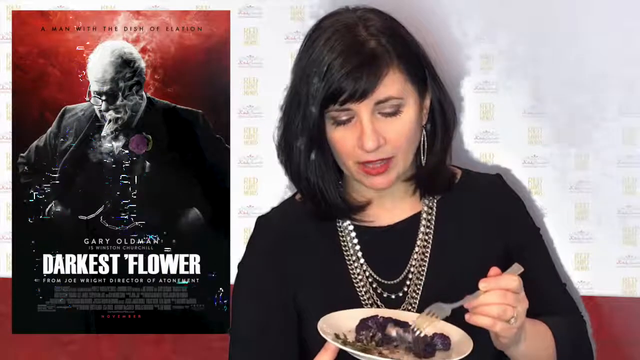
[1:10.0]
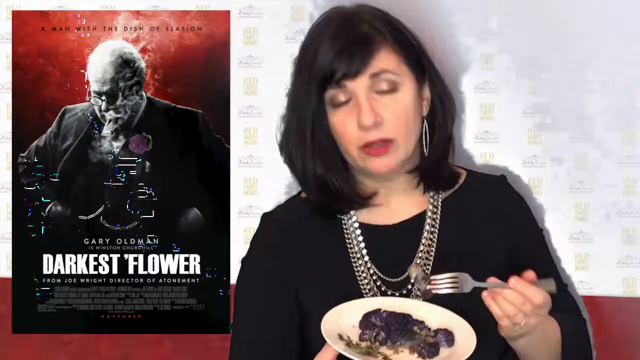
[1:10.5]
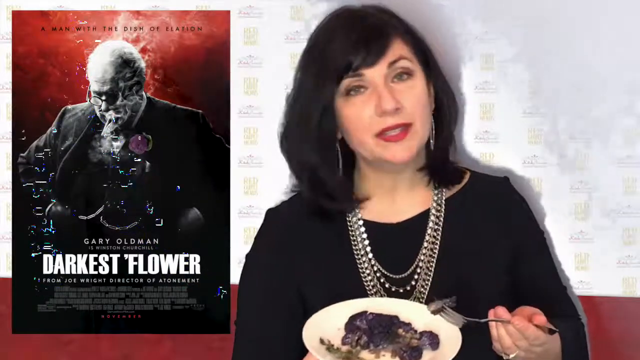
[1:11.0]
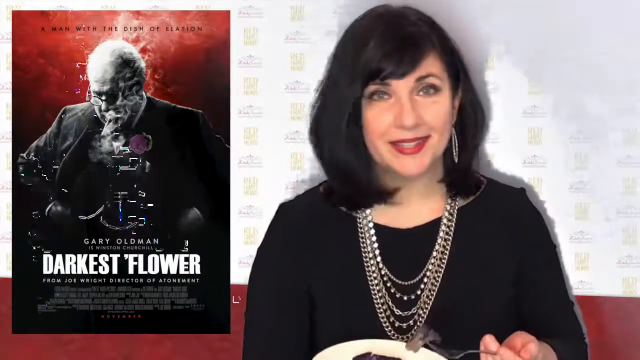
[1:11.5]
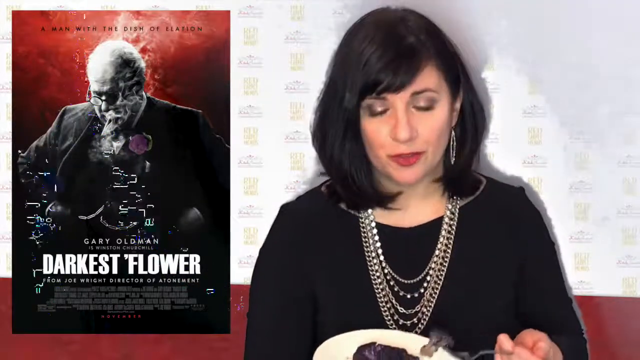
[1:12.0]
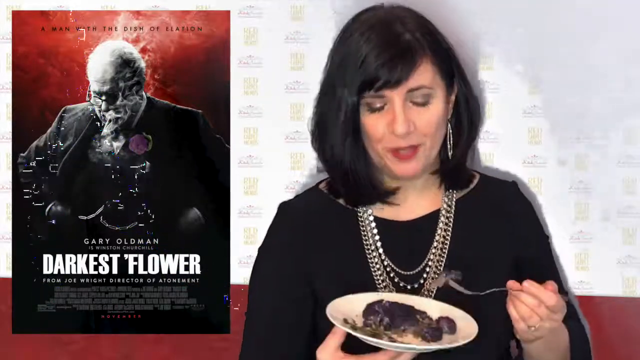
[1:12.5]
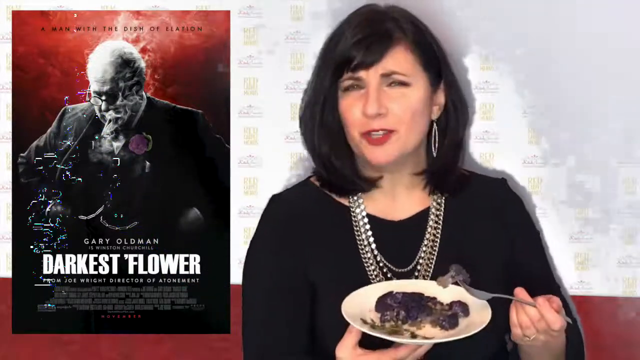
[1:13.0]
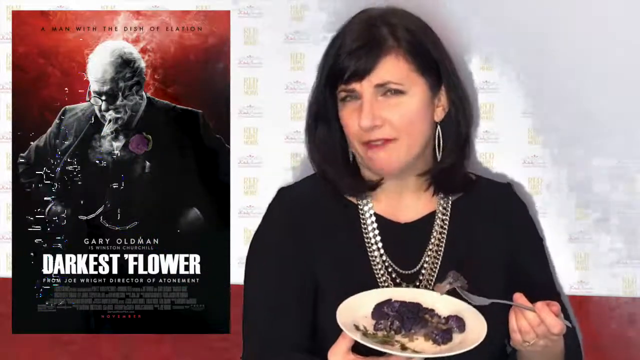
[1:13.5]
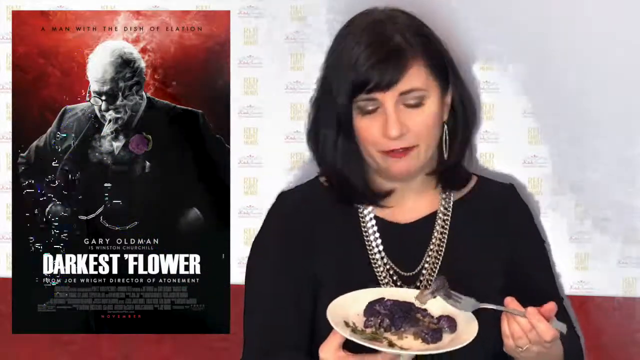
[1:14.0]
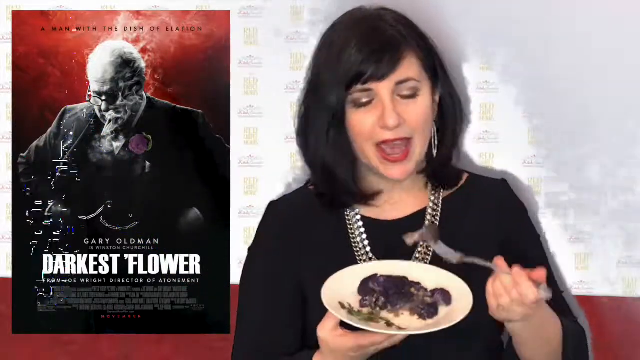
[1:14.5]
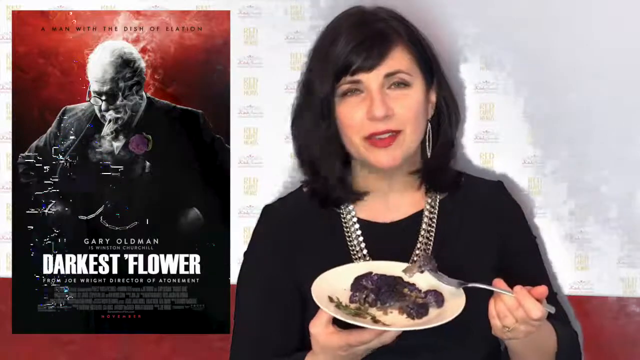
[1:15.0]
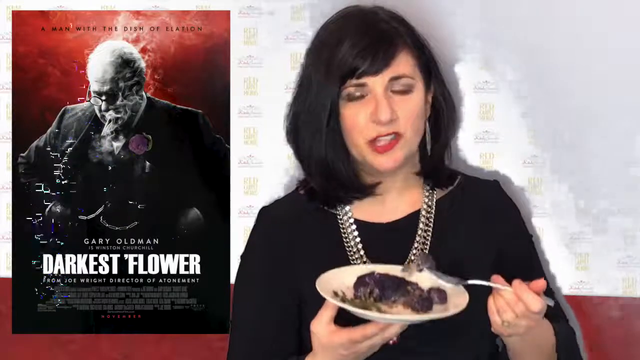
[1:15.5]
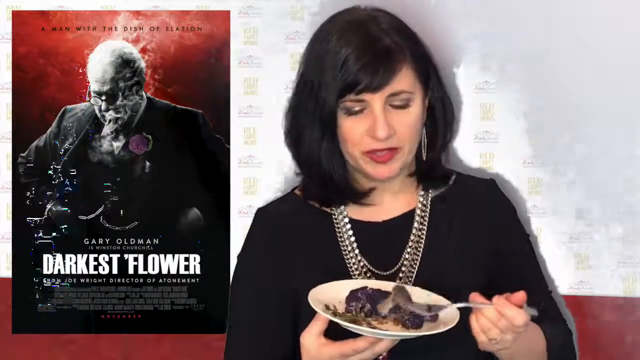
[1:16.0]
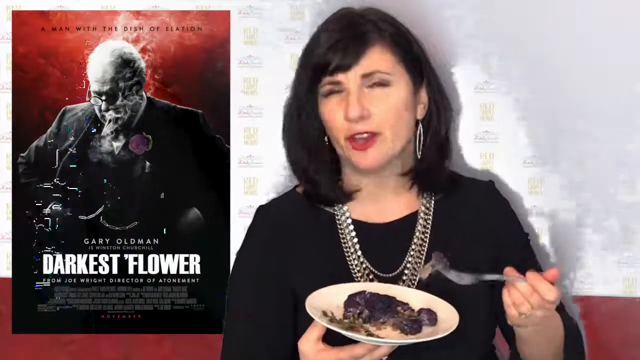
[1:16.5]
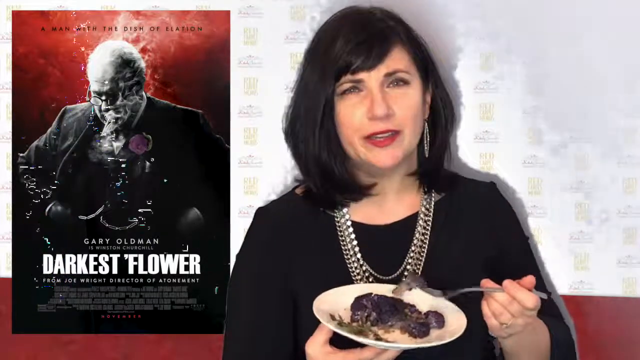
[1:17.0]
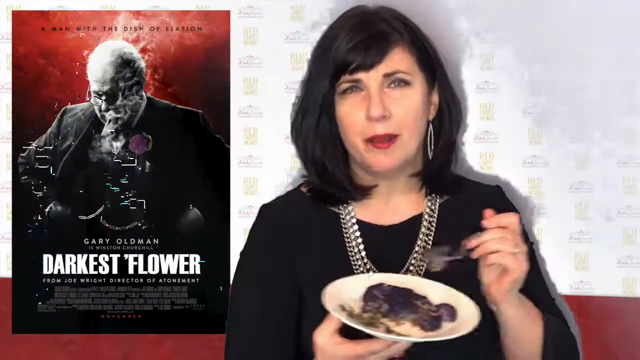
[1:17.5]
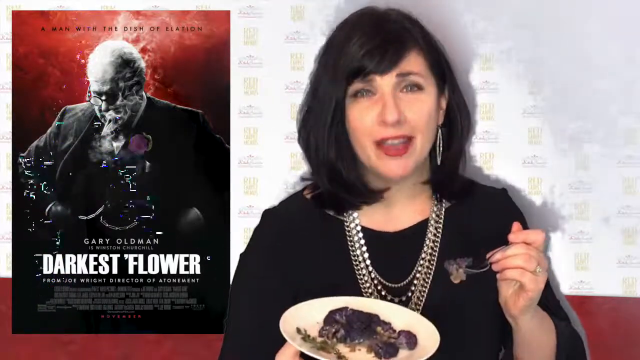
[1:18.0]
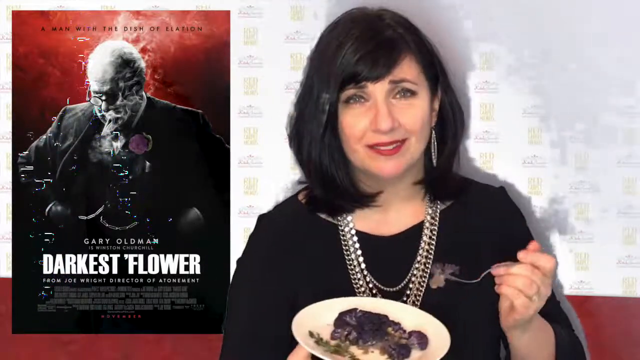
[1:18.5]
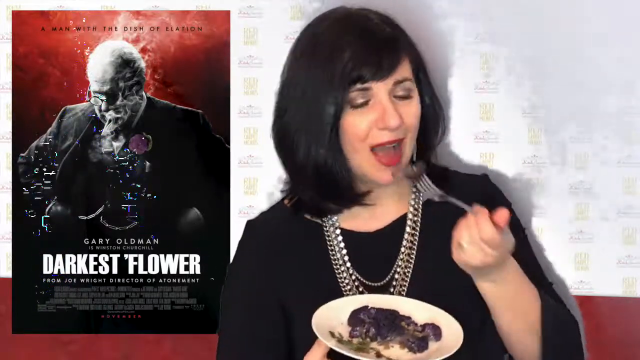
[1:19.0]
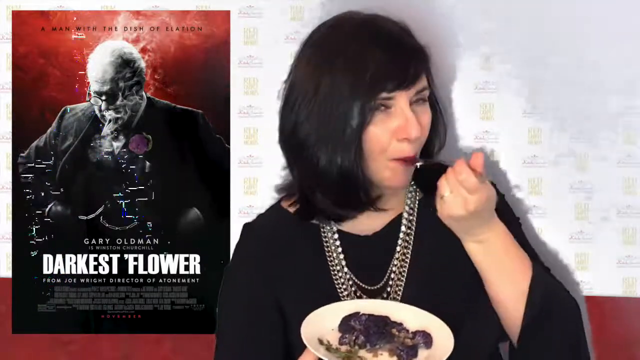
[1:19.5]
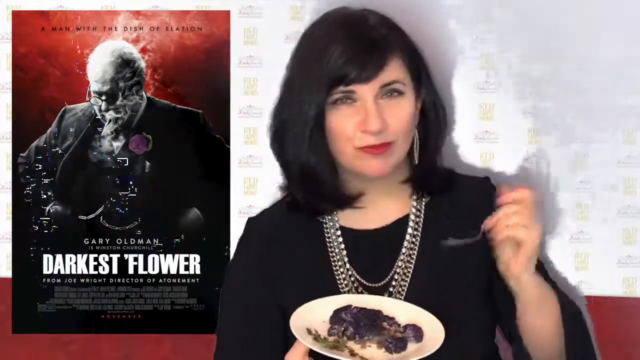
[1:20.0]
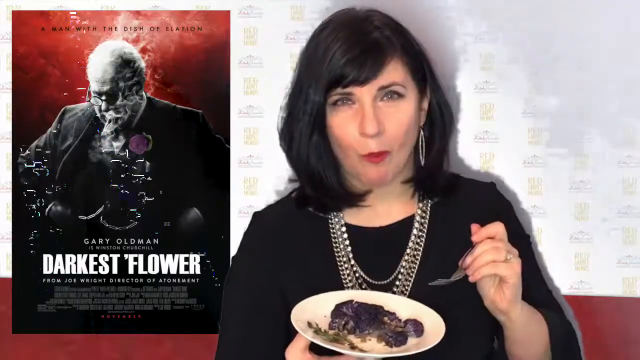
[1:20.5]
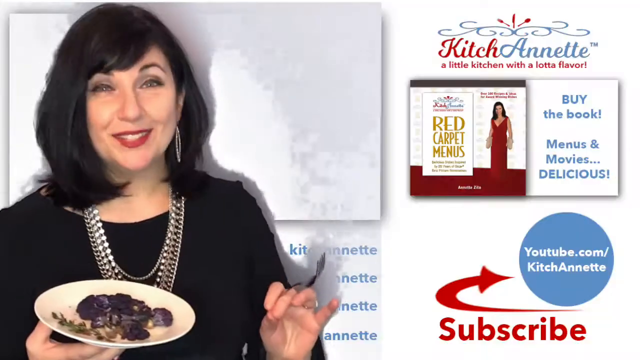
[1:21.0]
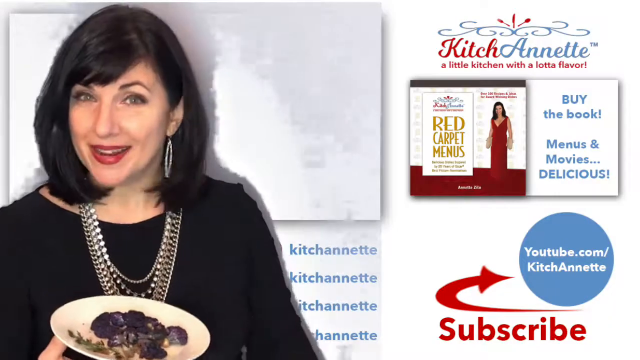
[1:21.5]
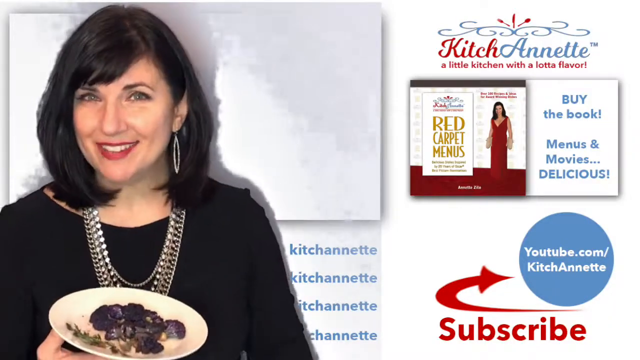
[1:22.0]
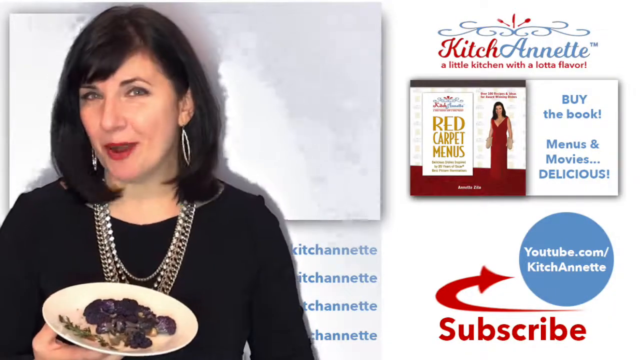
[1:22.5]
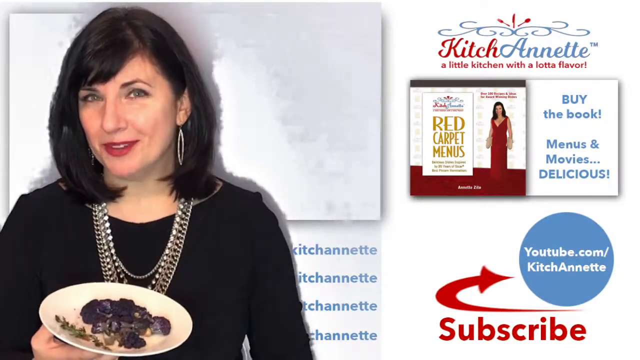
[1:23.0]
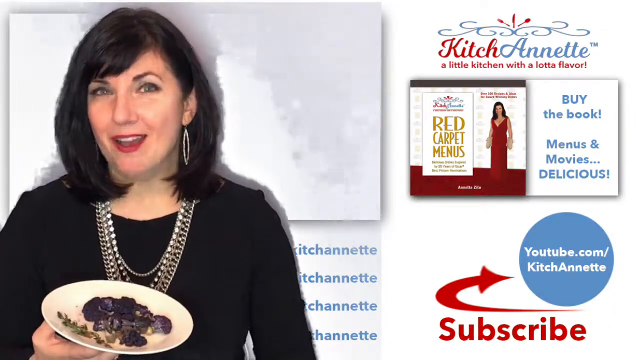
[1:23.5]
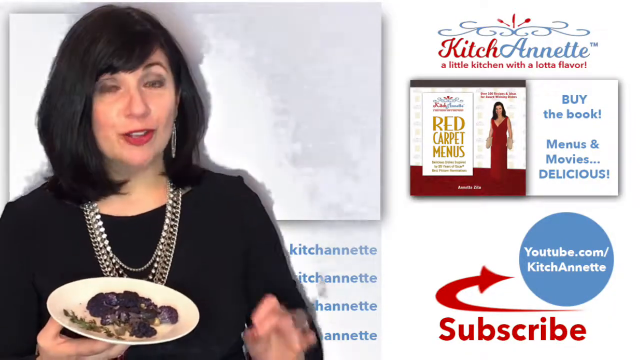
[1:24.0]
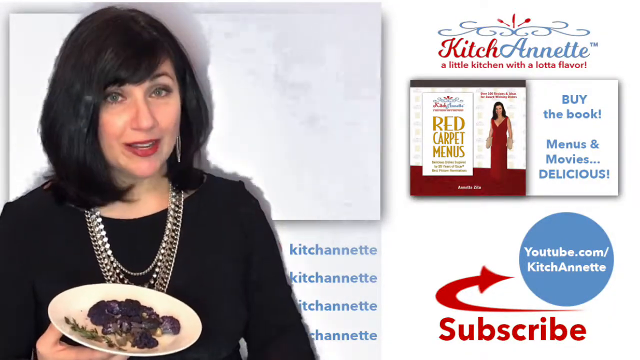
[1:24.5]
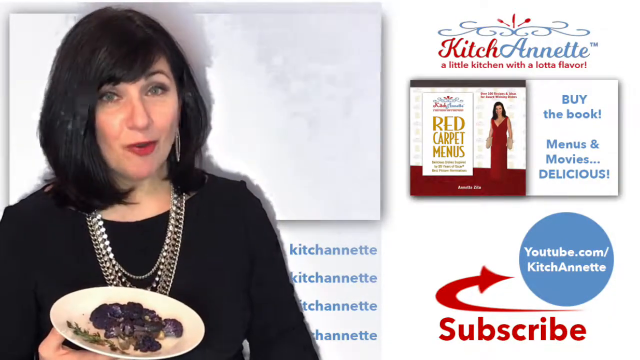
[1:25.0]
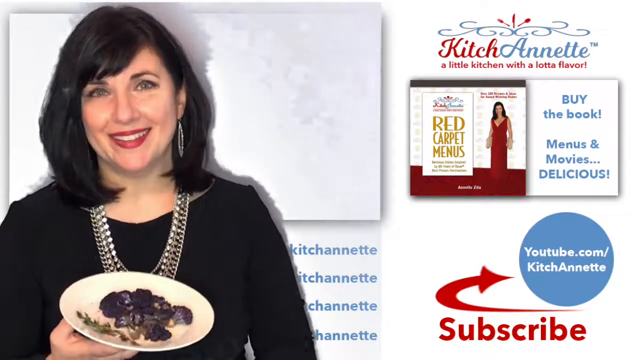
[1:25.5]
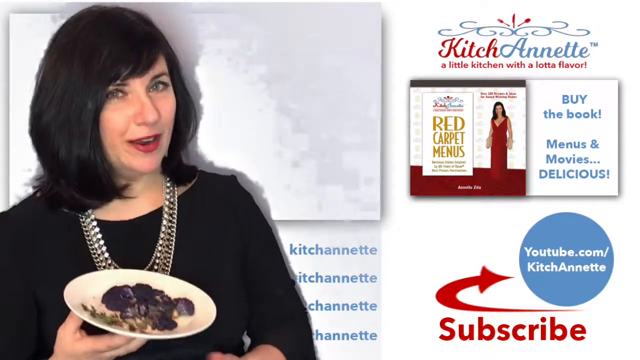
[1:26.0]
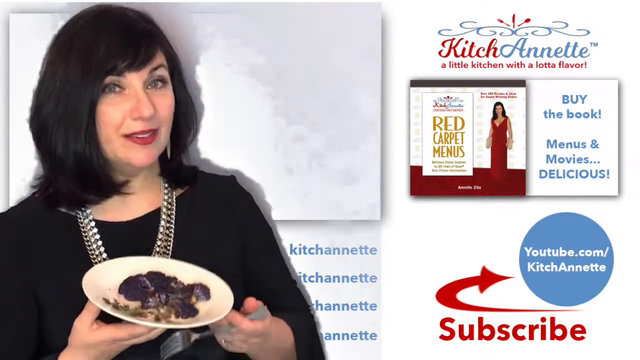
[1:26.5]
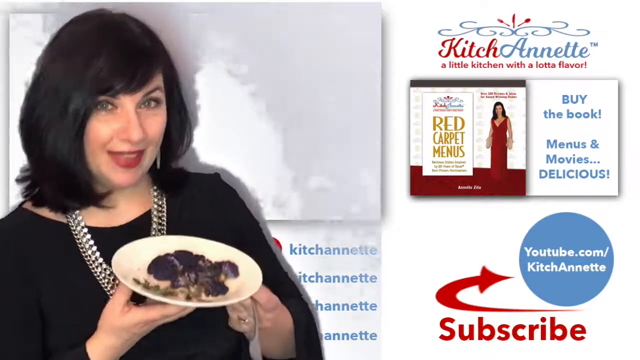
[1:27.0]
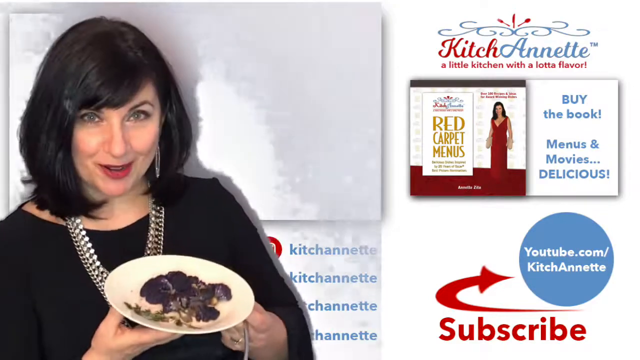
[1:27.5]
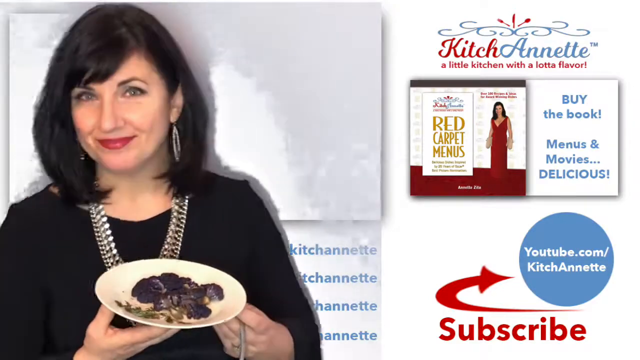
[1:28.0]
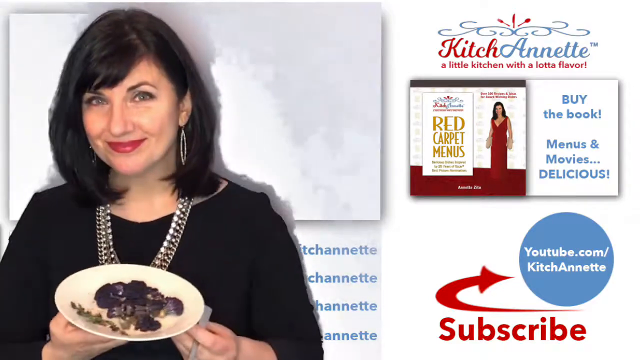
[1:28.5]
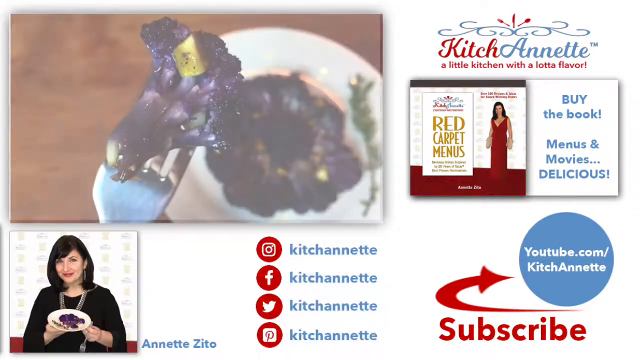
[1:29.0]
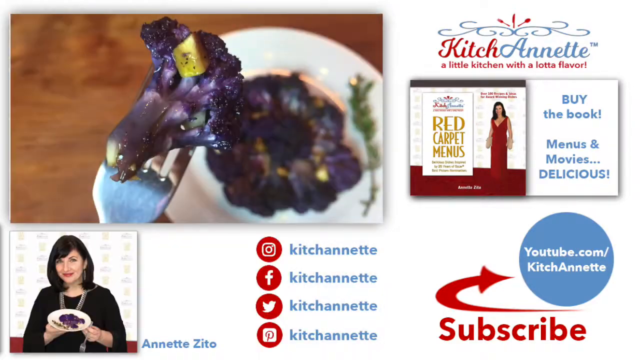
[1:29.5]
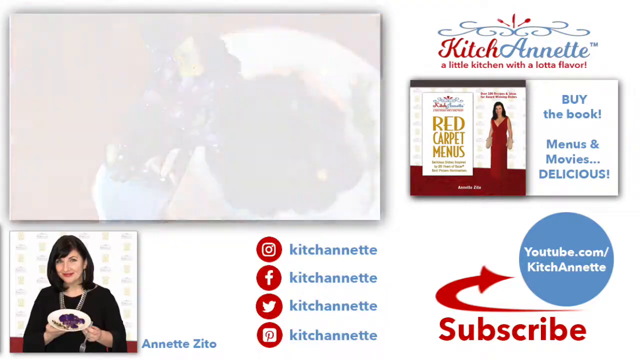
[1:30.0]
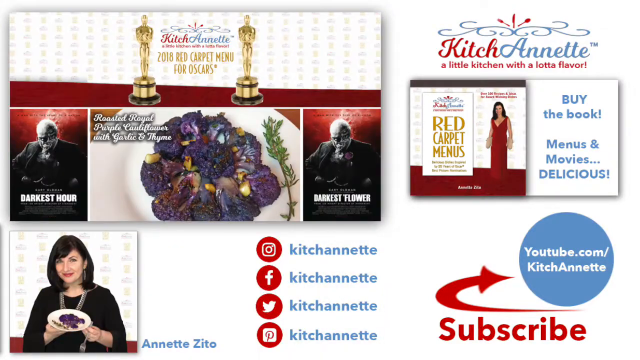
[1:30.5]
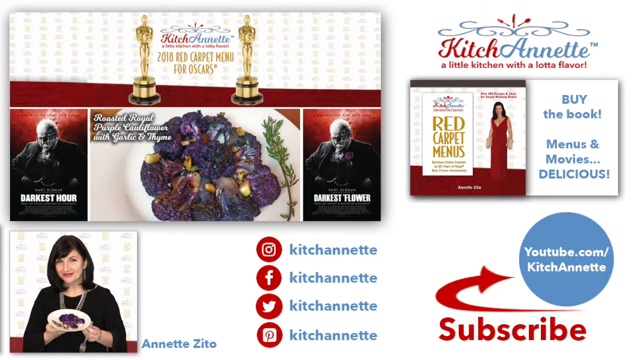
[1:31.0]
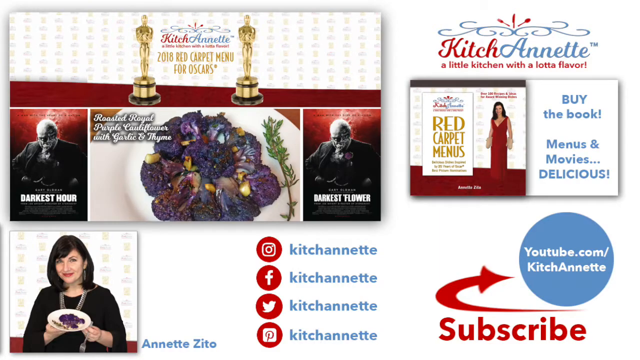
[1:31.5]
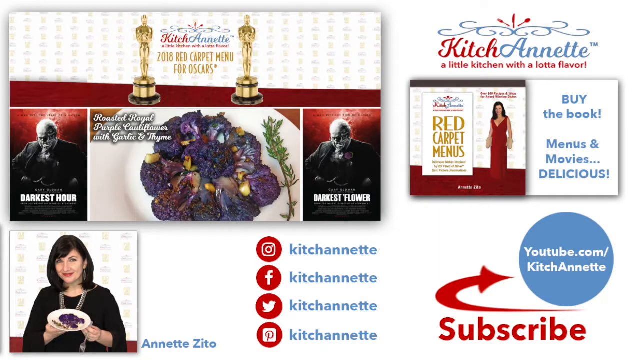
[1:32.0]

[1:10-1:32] The woman, in a black dress with necklaces, short black hair, two earrings and red lipstick, eats the purple cauliflower florets mixed with thyme, garlic and olive oil, using a fork. The screen then transitions to a kind of kitchen screen with text reading "a little kitchen with a lot of love", some more text, a link to a subscribe page and a youtube.com link to the creator, who seems to be the woman in the video. It also shows kind of an informational screen with transitions between the purple cauliflower florets, the movie poster and the red carpet or Golden Globe background. The subscribe screen also includes Instagram, Facebook, Twitter and Pinterest links.